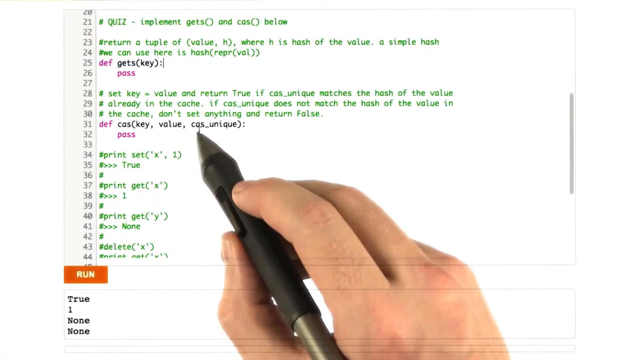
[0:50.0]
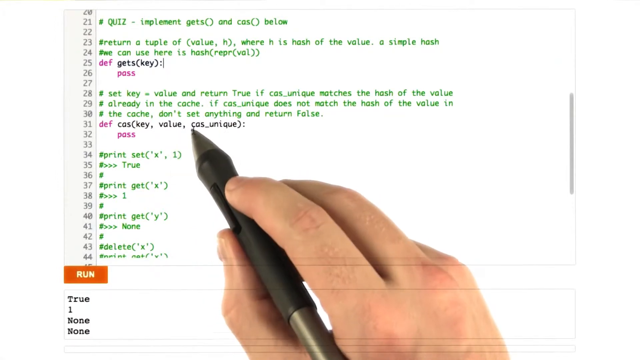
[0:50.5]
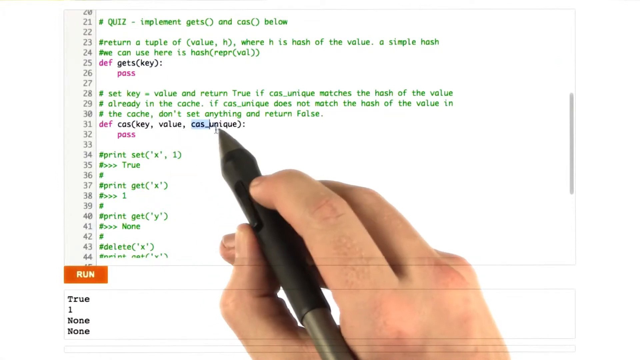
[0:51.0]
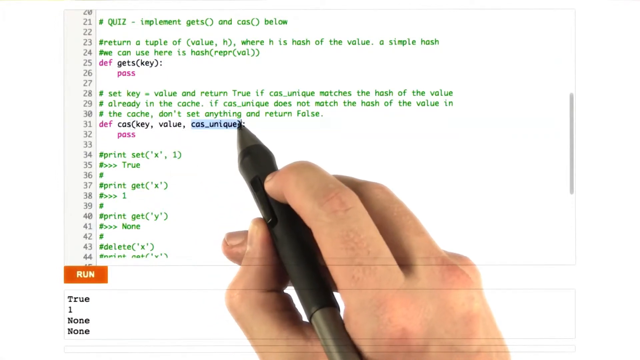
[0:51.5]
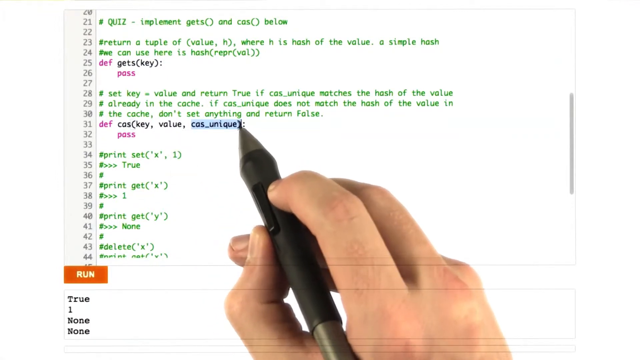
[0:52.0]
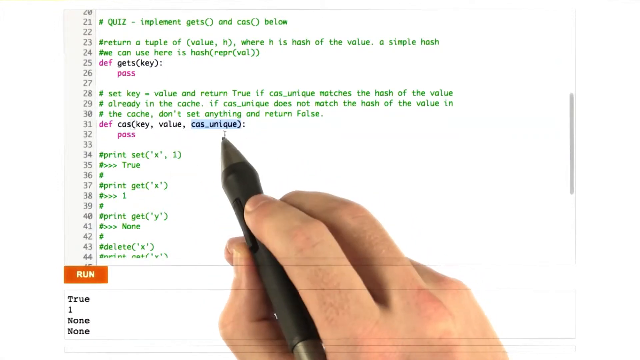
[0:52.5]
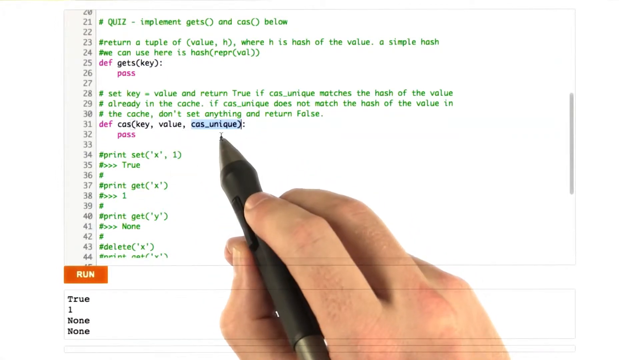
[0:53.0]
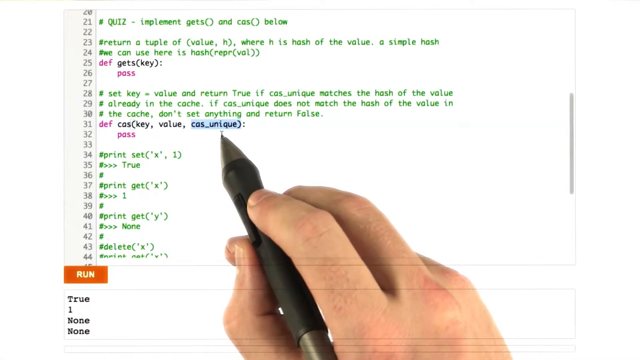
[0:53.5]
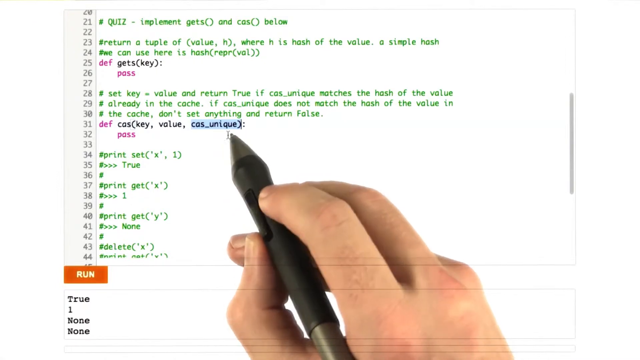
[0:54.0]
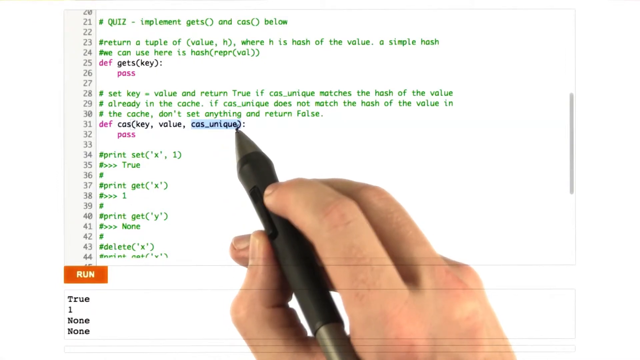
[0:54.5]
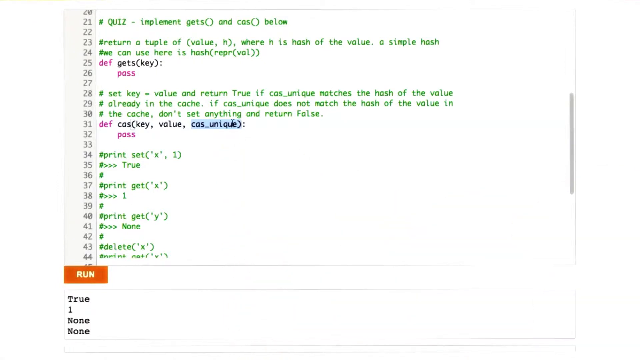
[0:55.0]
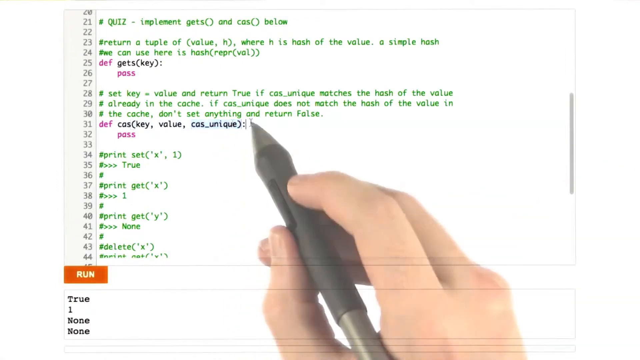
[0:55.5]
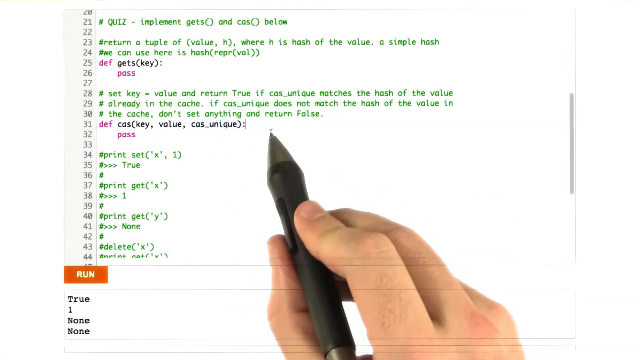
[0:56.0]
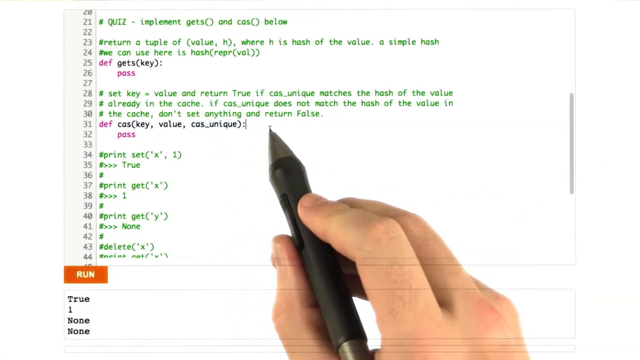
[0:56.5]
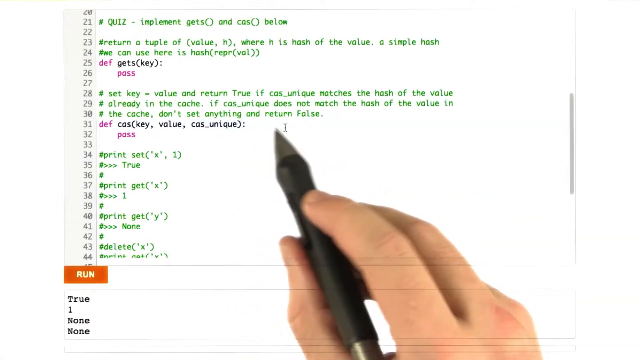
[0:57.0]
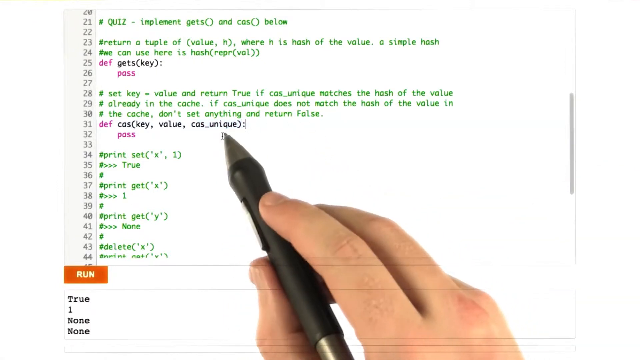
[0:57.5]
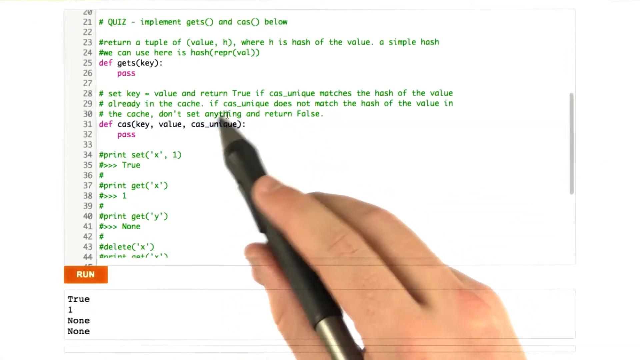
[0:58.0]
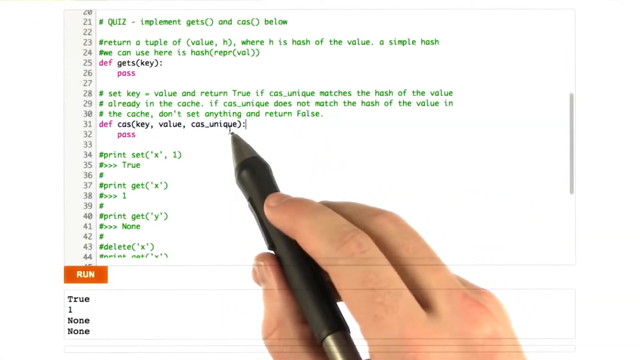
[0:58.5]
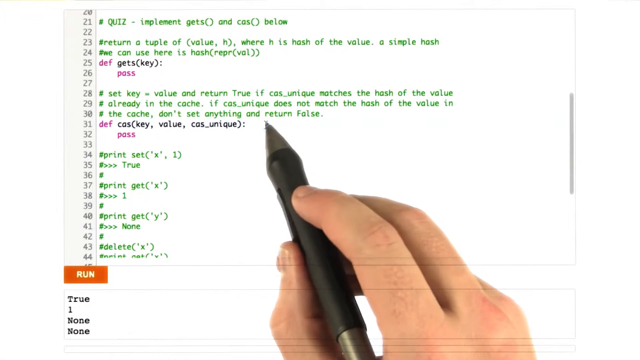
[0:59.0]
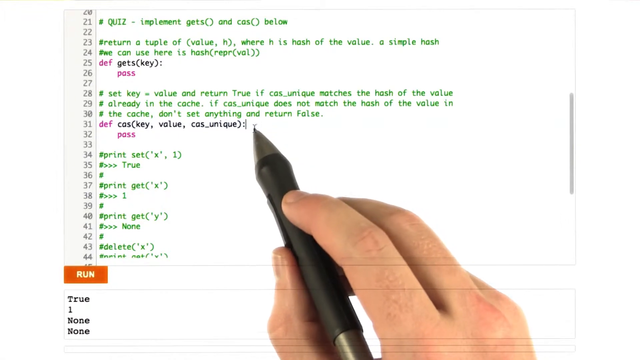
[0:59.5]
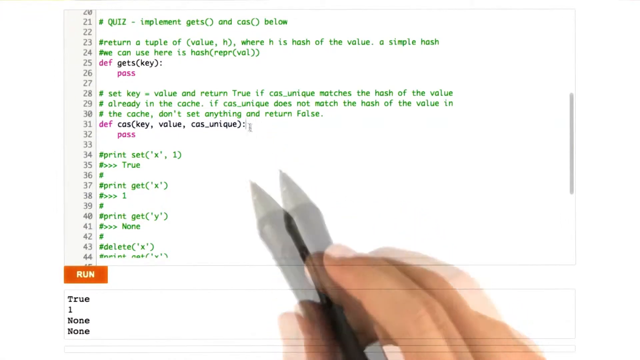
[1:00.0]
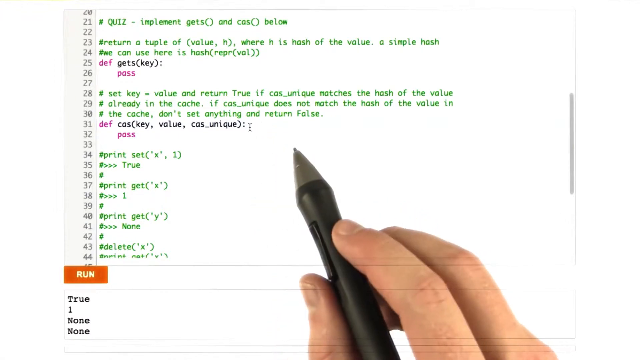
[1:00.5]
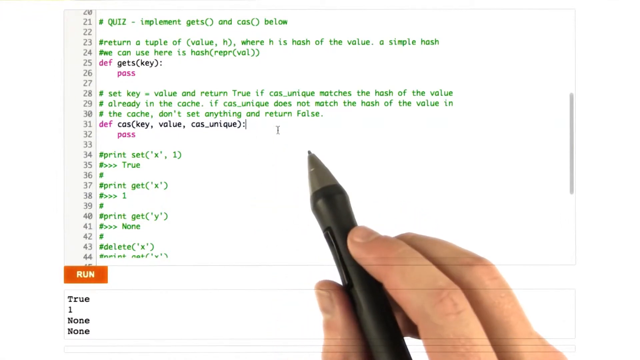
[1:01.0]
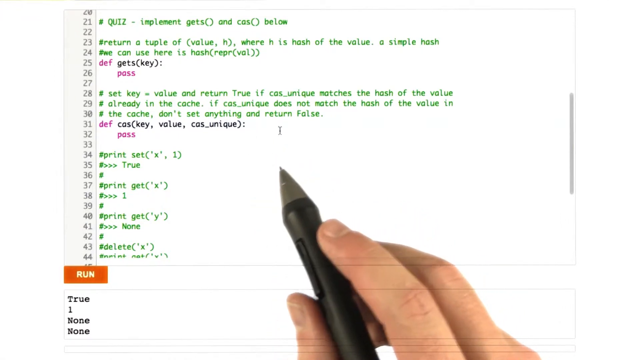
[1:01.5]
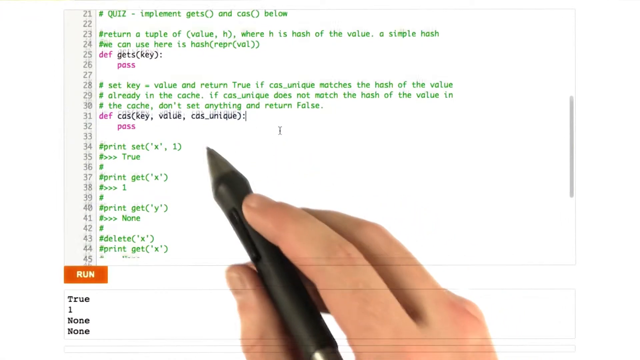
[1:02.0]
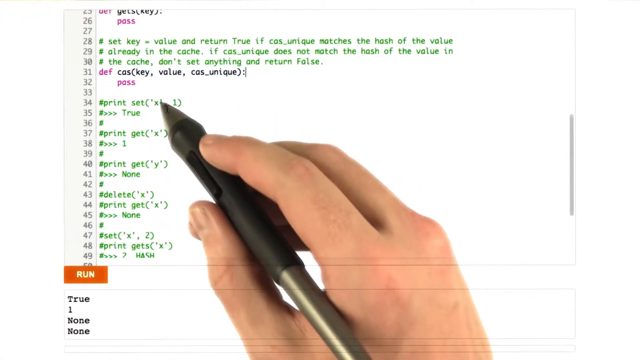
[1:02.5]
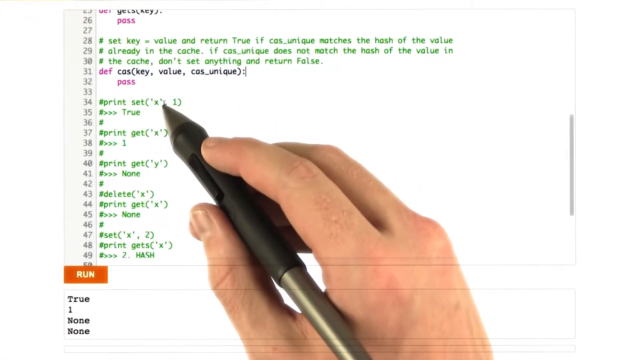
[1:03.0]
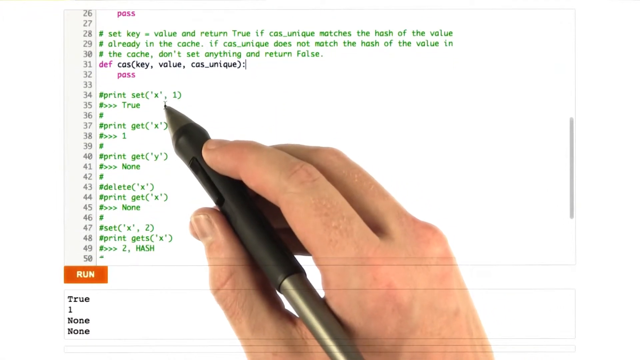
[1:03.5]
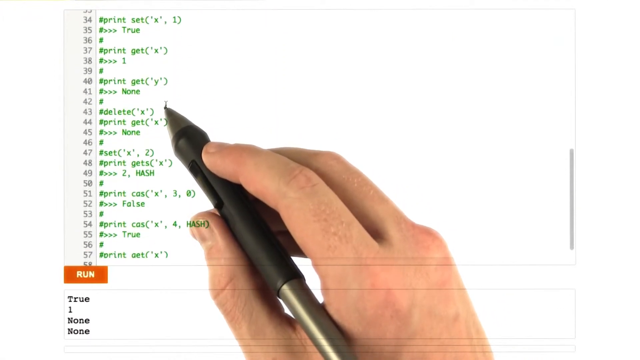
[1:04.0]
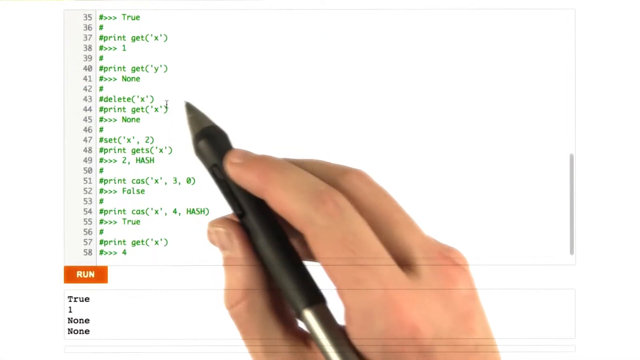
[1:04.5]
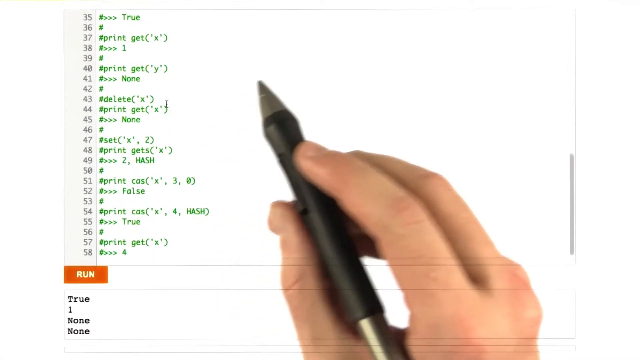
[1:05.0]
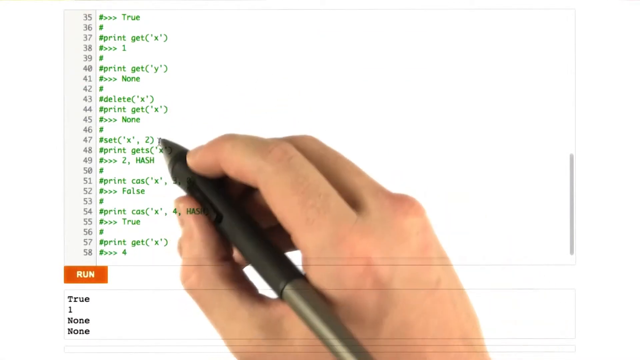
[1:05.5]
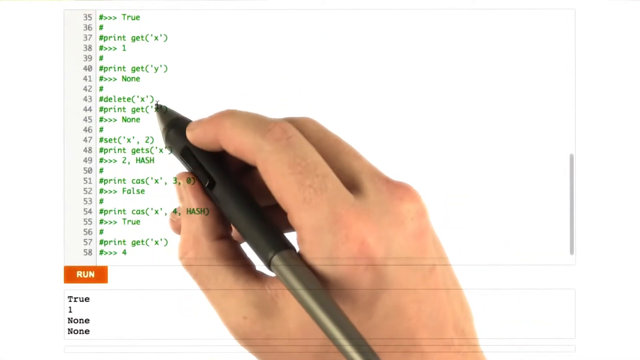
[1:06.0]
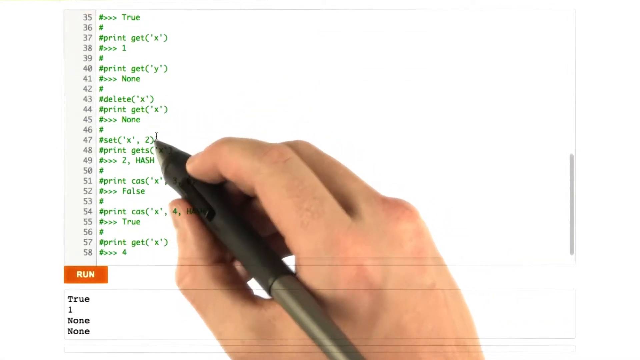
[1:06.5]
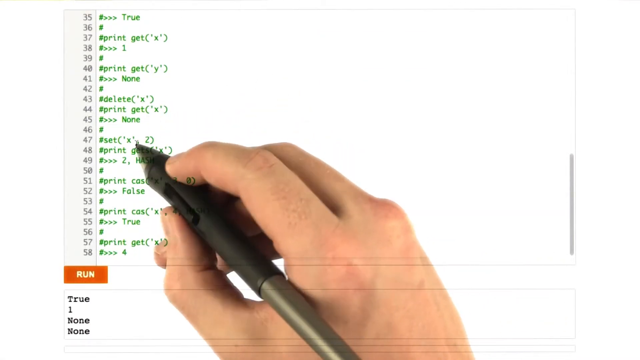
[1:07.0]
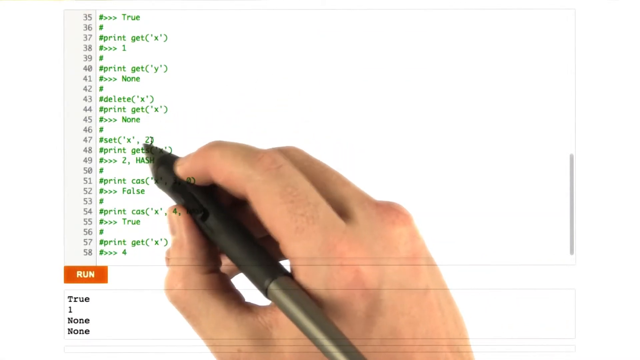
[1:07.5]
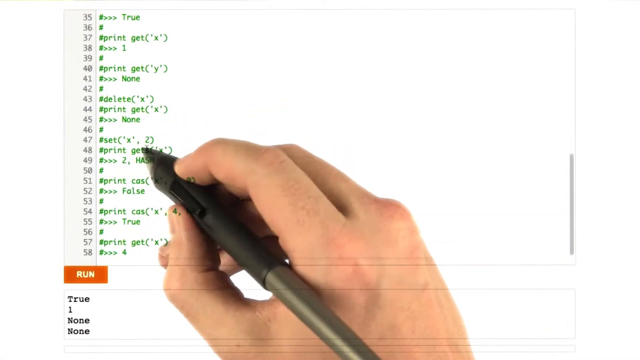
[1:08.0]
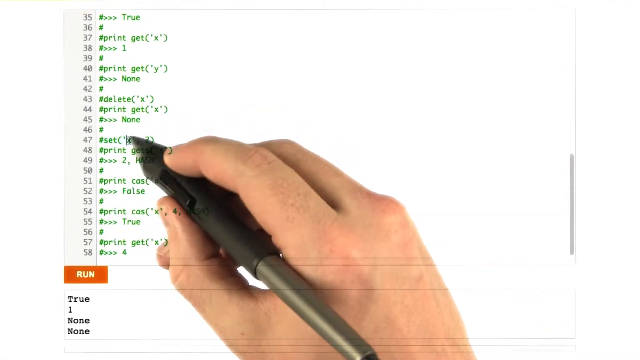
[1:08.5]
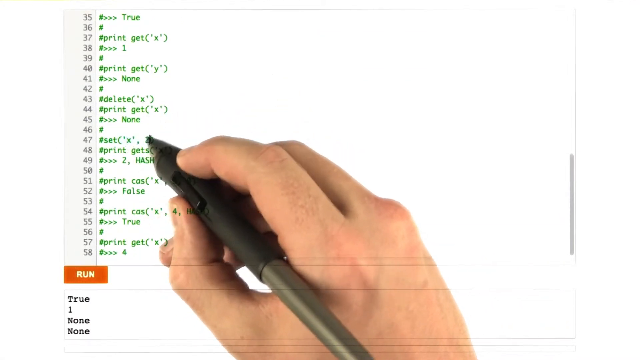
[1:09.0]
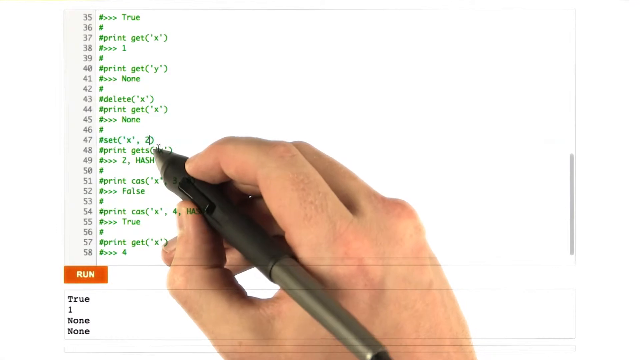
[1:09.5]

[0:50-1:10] The person continues highlighting different words on the screen. First, on line 31, they highlight the letters "CAS_unique" in blue. They move the pen down to line 32 and highlight "PASS", which is written in purple and has a transparent light blue highlight. The hand then comes down slightly under "CAS_unique" and makes a counterclockwise circular motion around the word. The pen appears to be slanted down toward the bottom of the screen more than before. It is still held between the thumb and forefinger, now with the cushiony area of the thumb underneath the pen and the tip of the forefinger touching it.